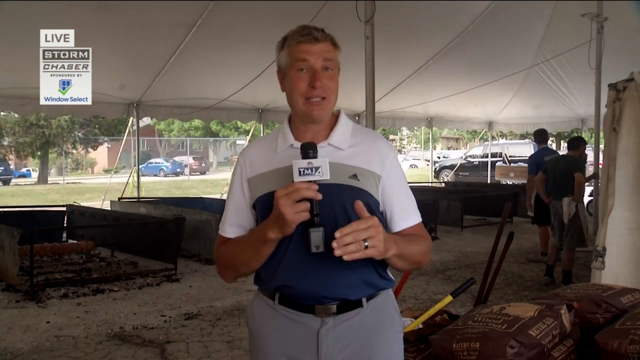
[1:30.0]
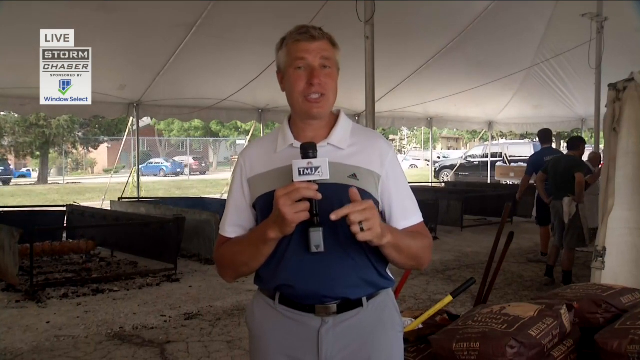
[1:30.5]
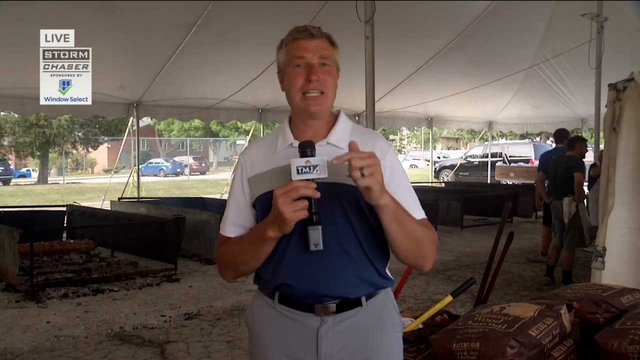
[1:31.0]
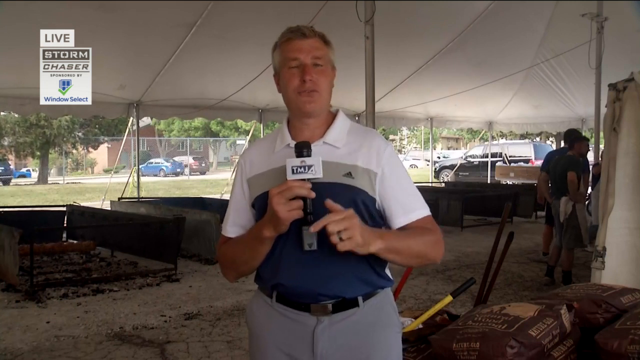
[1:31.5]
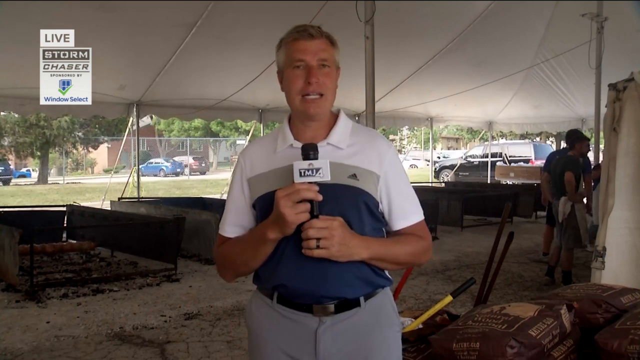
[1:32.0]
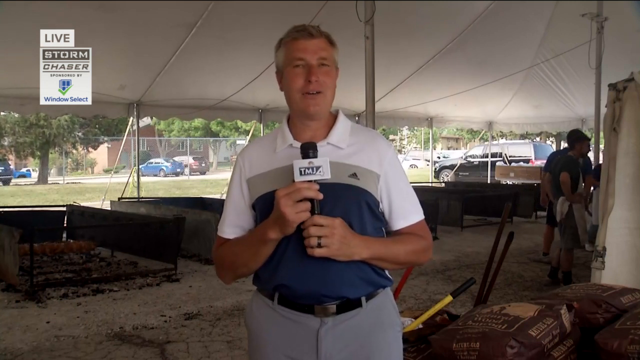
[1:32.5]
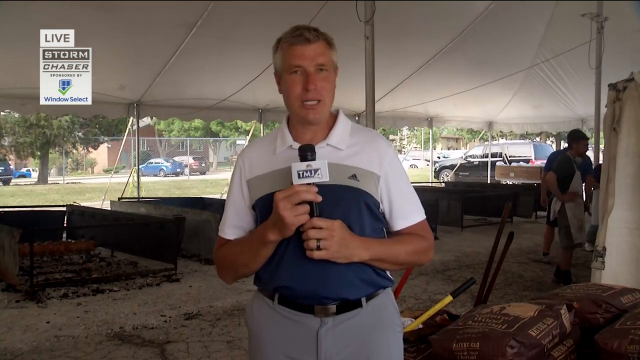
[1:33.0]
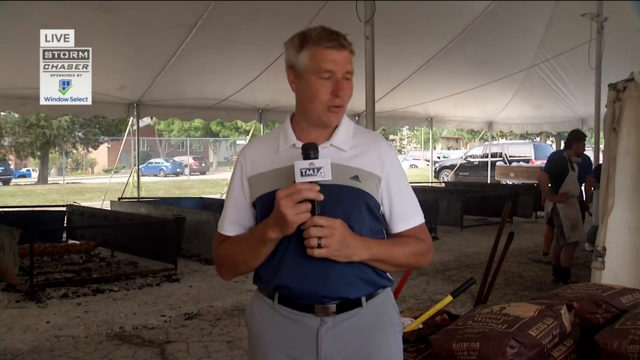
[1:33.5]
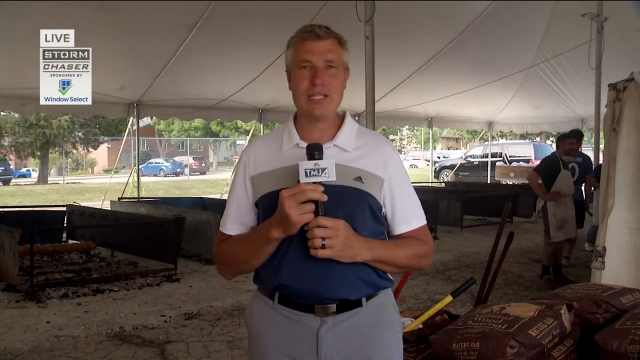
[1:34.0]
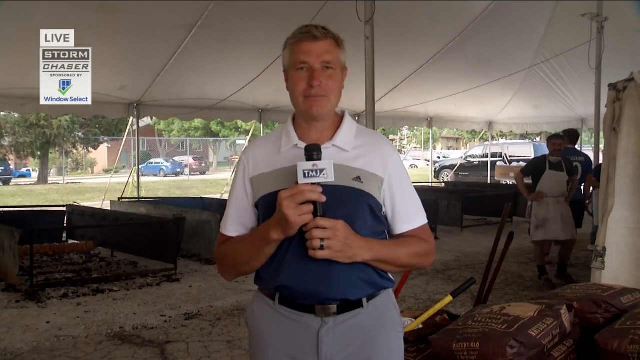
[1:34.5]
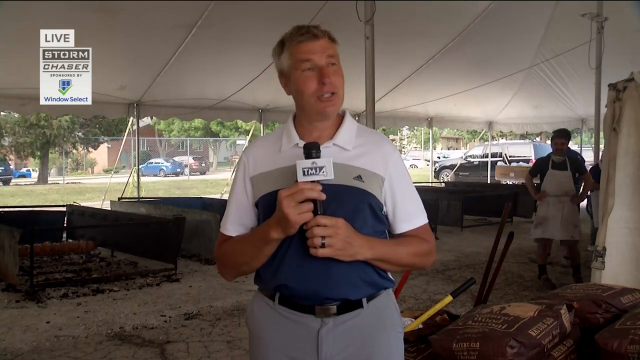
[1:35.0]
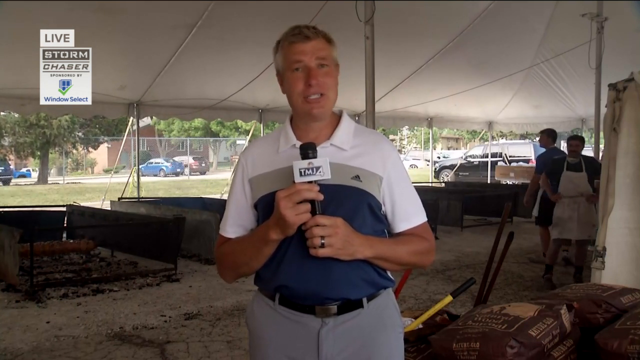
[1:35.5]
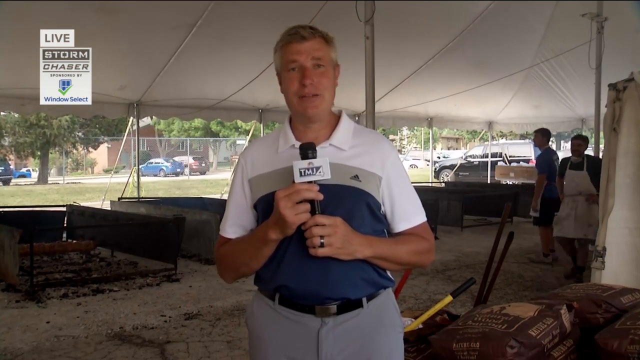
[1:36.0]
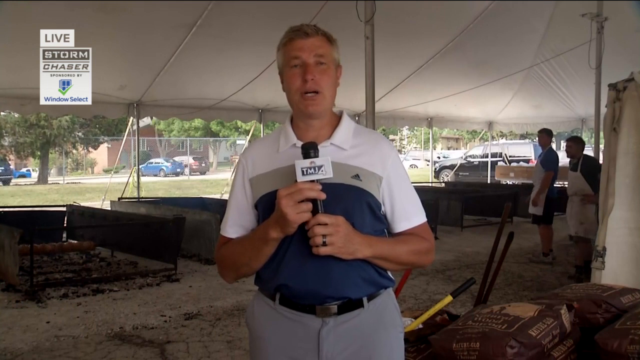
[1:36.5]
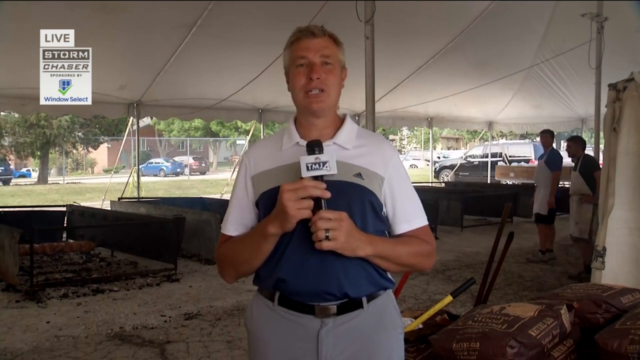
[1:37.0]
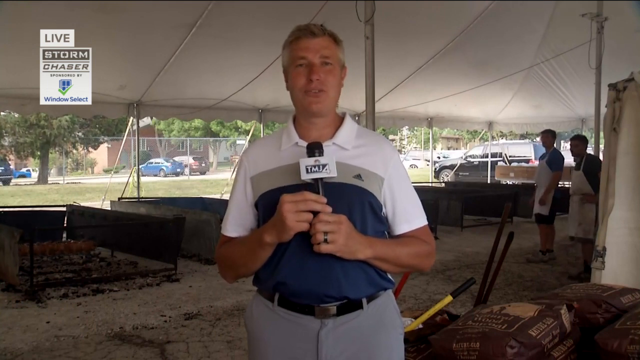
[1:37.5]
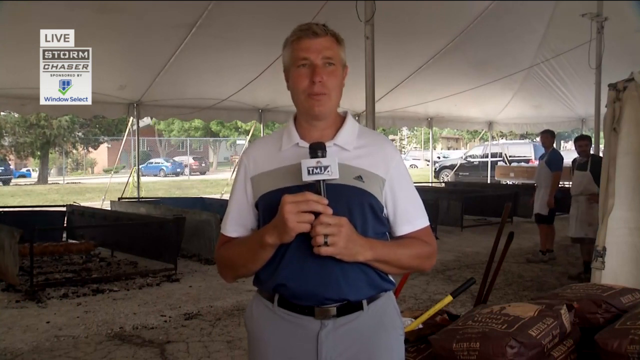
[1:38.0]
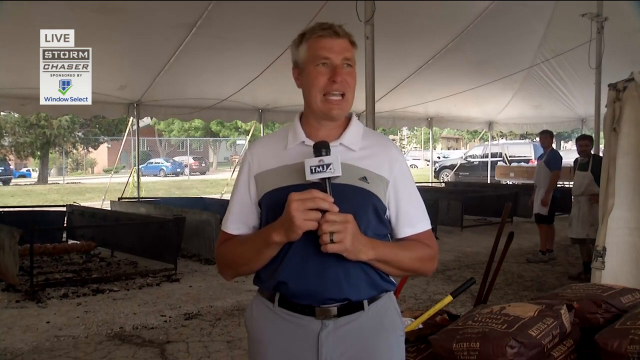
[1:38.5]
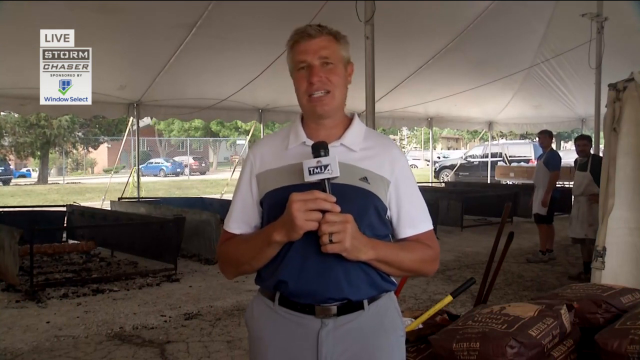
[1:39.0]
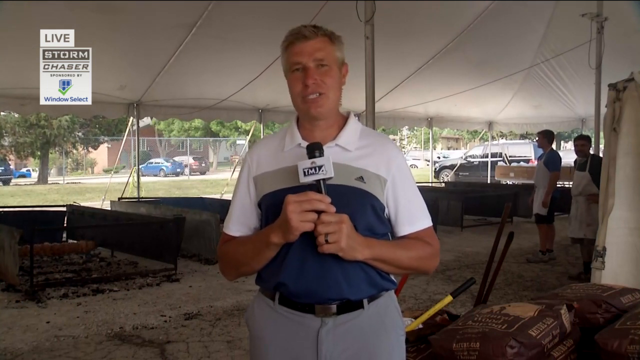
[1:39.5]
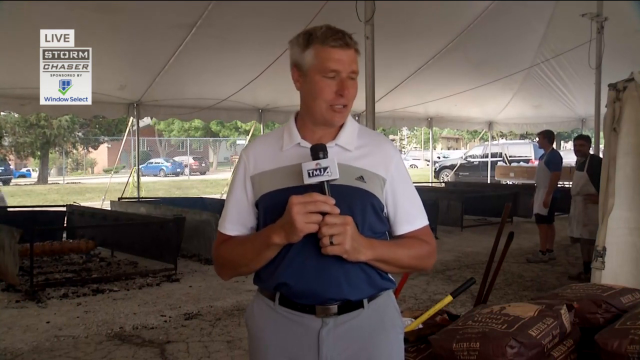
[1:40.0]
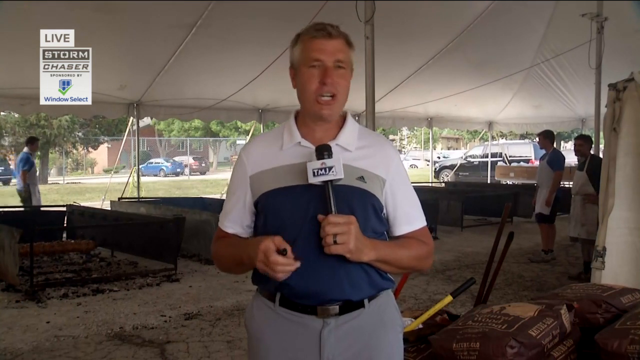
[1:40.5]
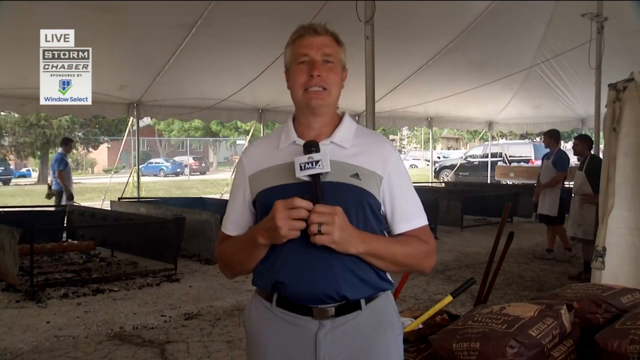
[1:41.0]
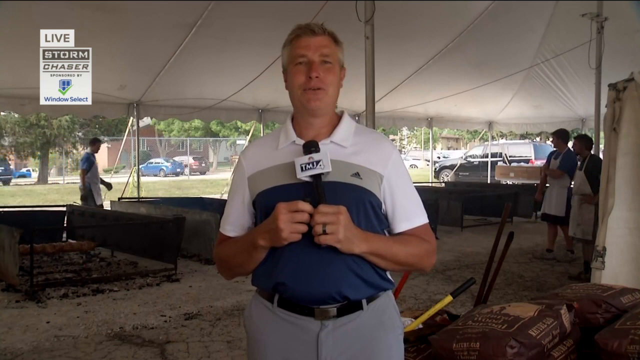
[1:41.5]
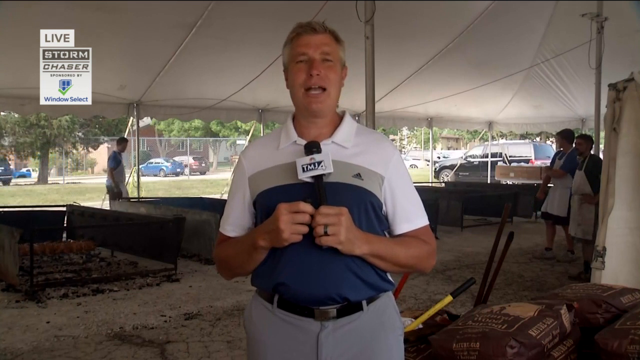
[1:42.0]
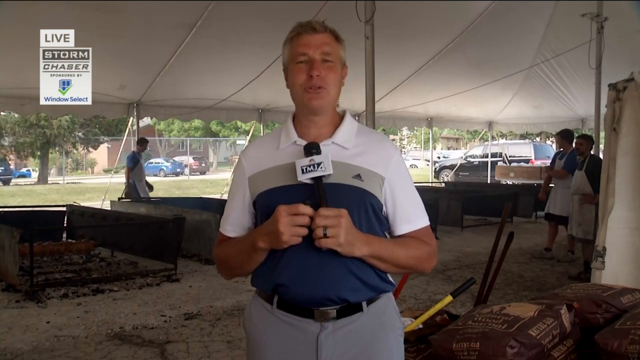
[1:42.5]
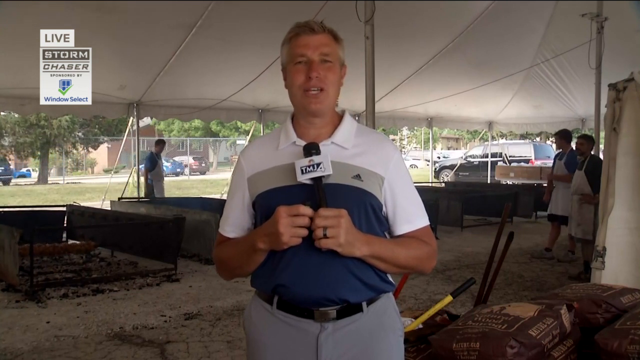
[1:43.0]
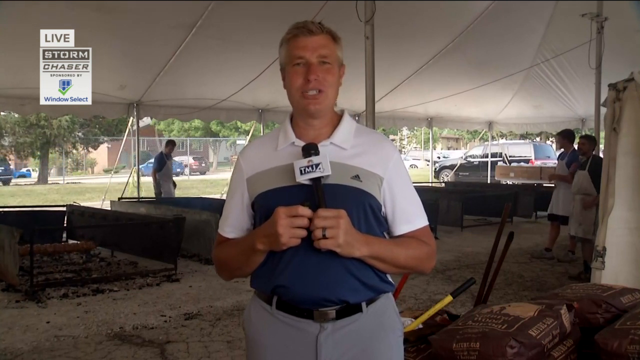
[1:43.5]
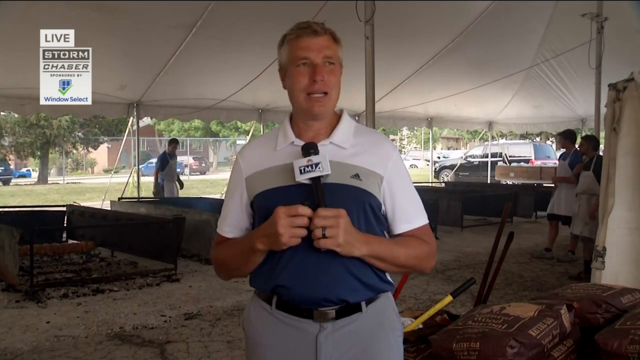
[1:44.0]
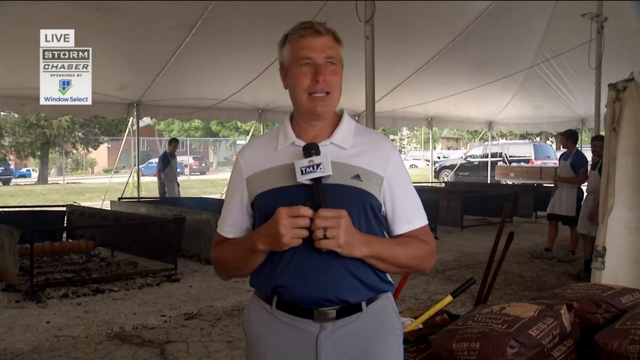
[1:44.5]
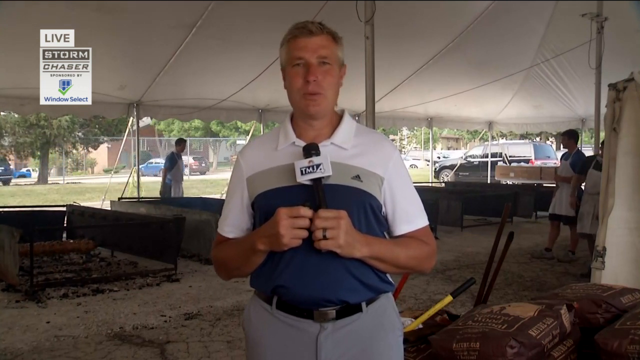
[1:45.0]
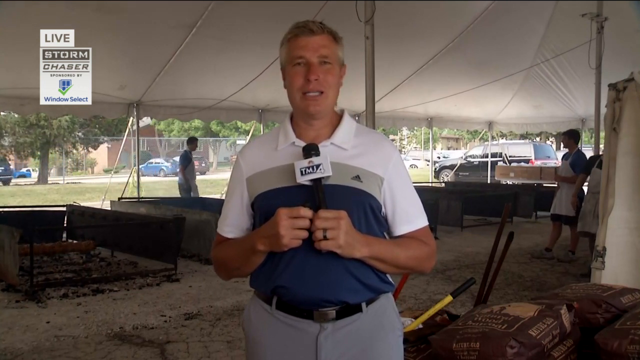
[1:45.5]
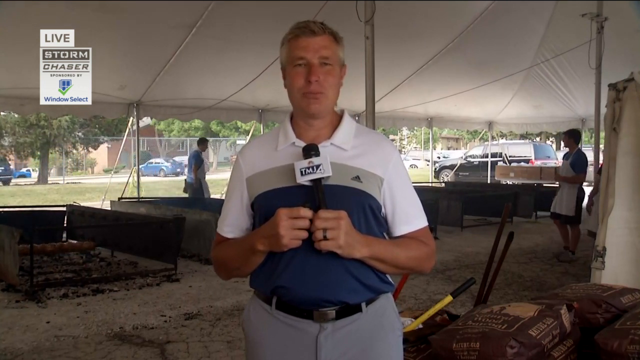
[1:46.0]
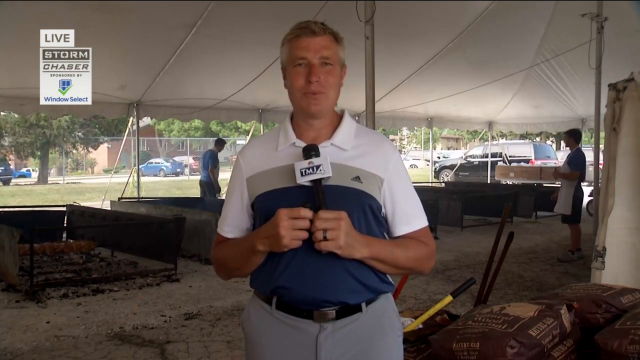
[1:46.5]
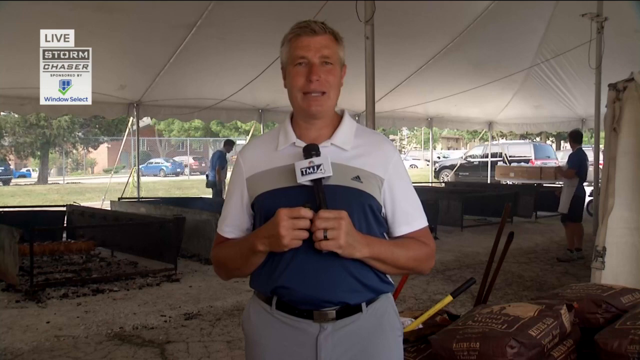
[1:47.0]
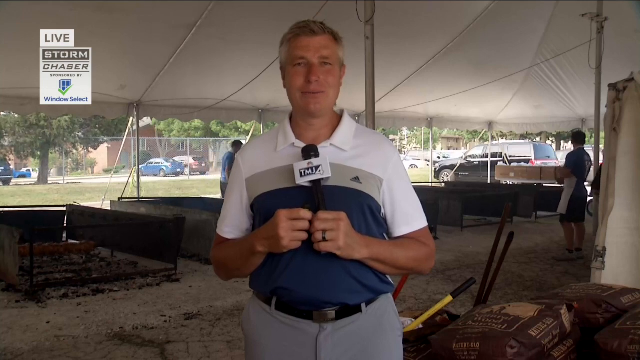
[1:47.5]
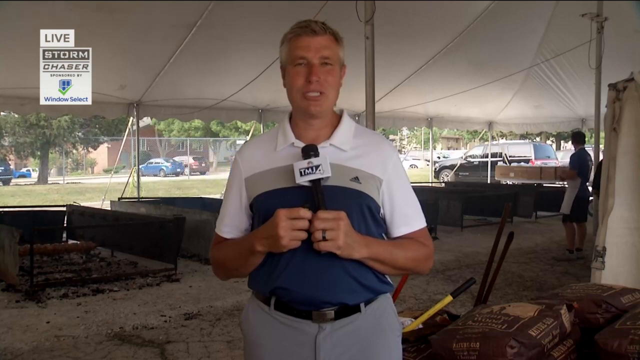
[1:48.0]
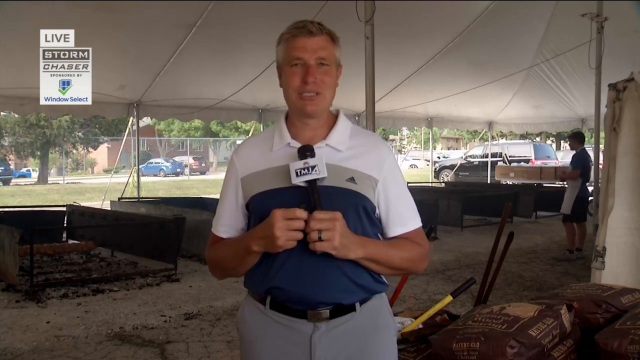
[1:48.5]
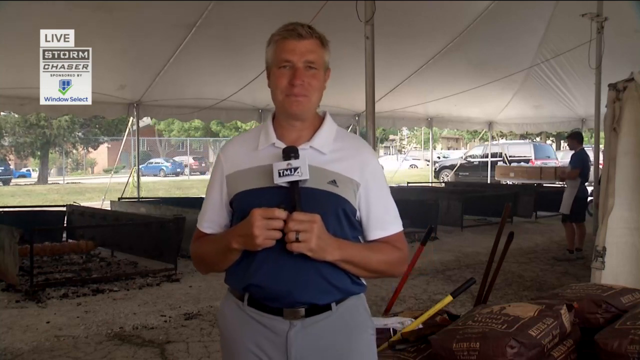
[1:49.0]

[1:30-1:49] The live broadcast continues with the man holding the mic in his left hand and gesturing with his right hand, which seems to have a ring on it. He seems to be explaining something. Behind him are cars and people who seem to be under a white tent, possibly where people are working. There are bags that could be cement or could carry other products, and there seems to be fencing at the edge of the tent. One person seems to move from the left-hand side down next to the cars, and another is standing behind him on his right on what seems to be a white covering; that man continues standing there, conversing with the one who had just walked in. Outside the fence is a brown building with cars parked outside it, and a group of what could be boxes is at the end of the tent on the right-hand side, where the other man is standing.